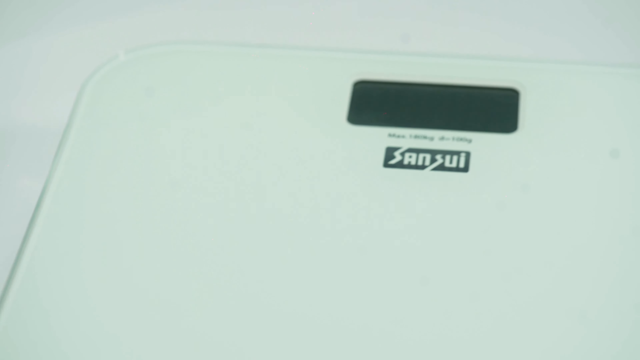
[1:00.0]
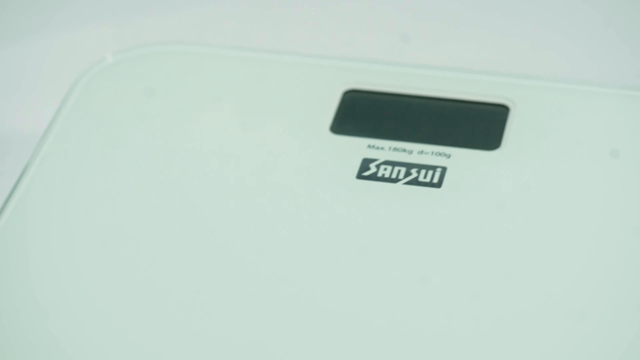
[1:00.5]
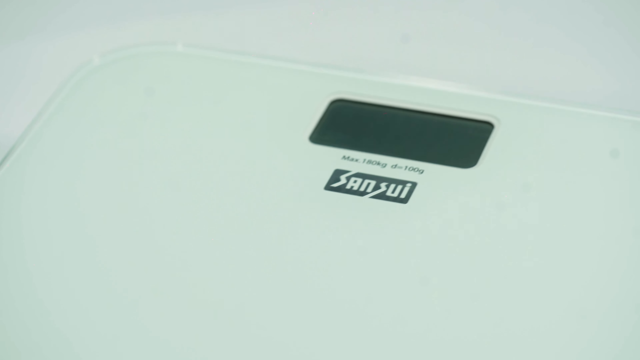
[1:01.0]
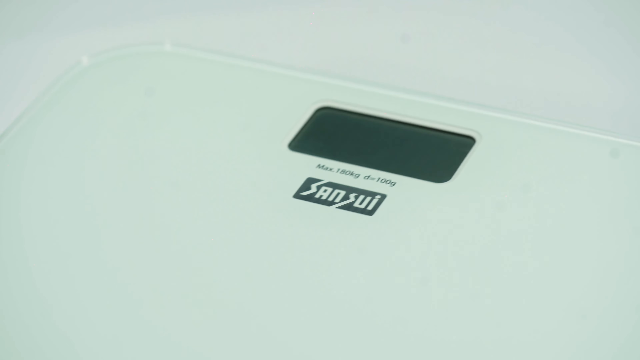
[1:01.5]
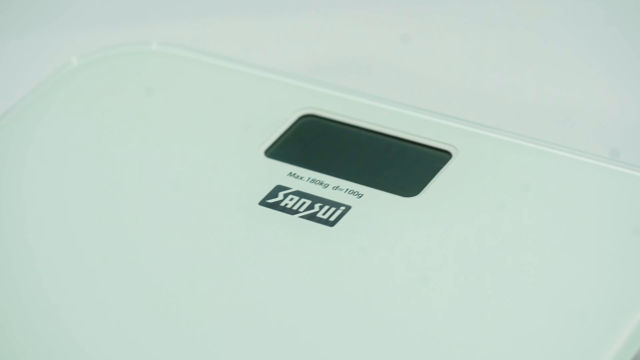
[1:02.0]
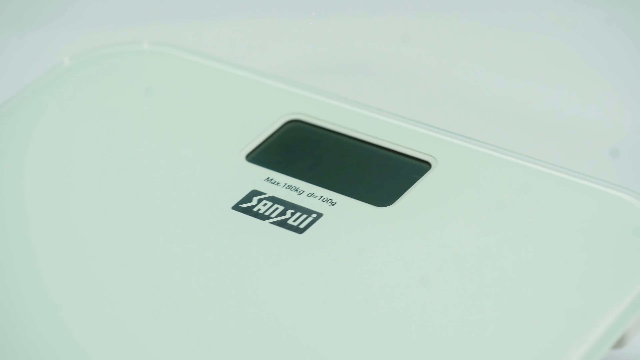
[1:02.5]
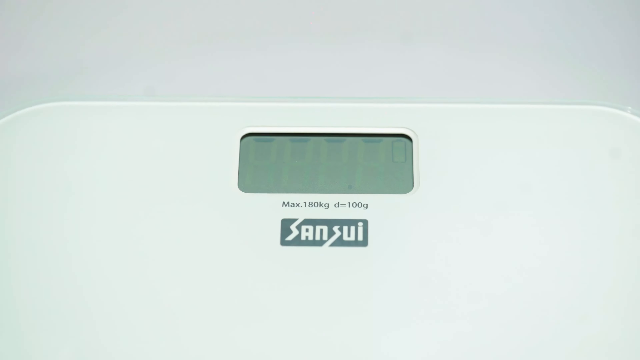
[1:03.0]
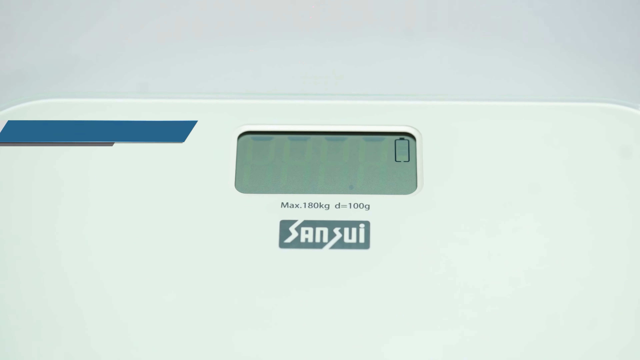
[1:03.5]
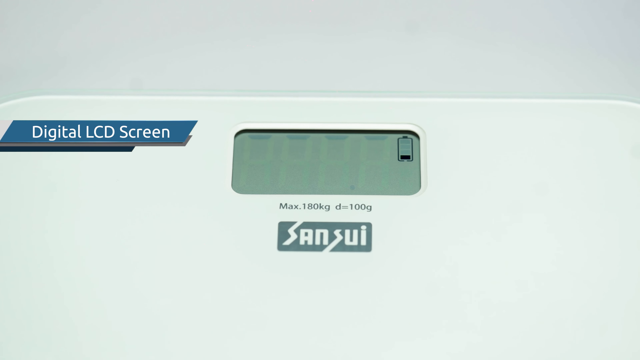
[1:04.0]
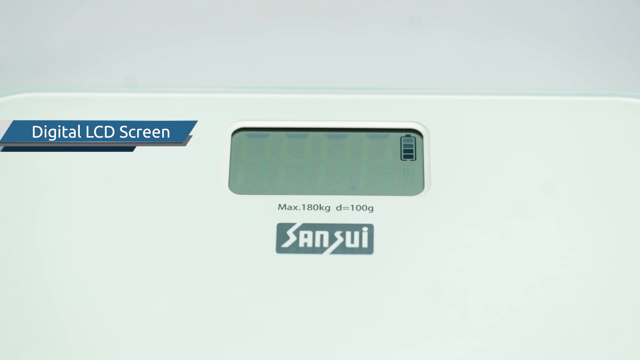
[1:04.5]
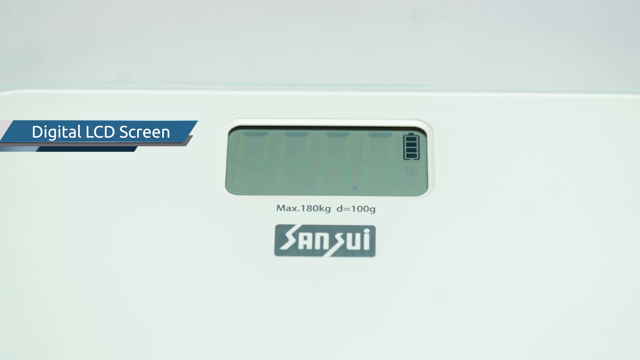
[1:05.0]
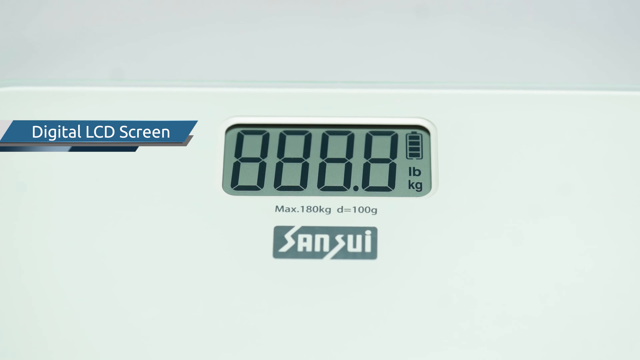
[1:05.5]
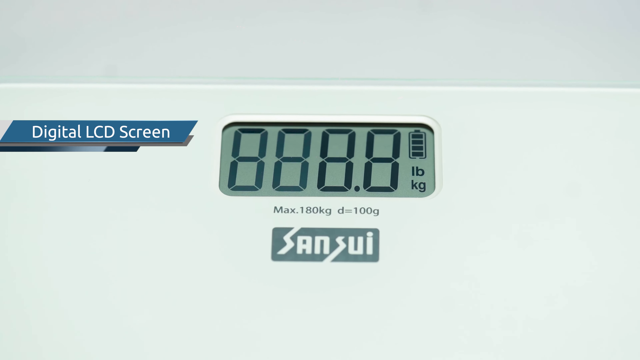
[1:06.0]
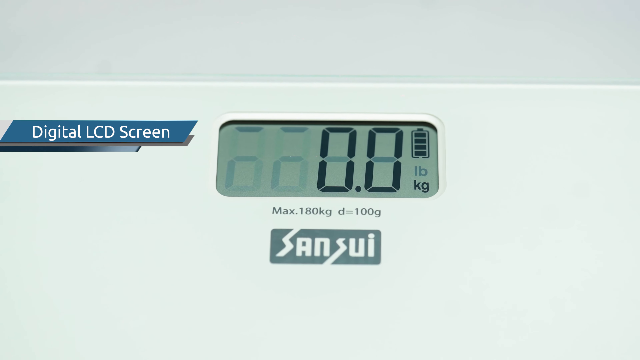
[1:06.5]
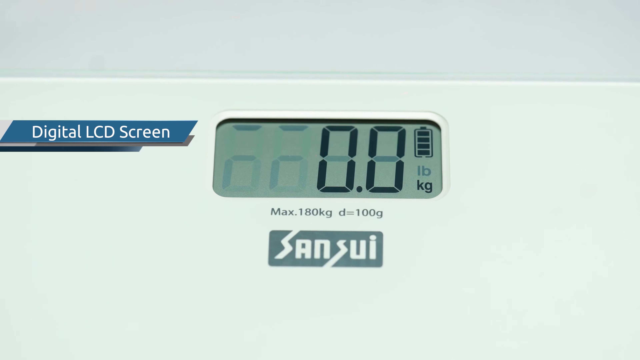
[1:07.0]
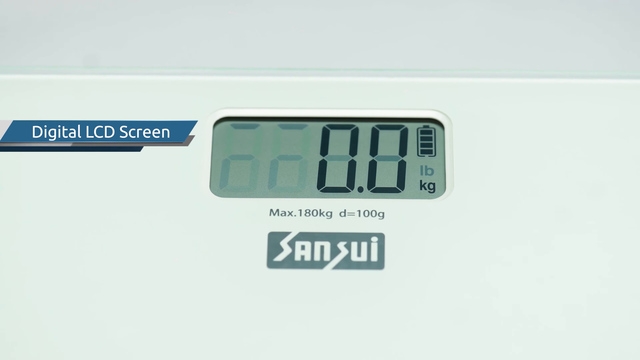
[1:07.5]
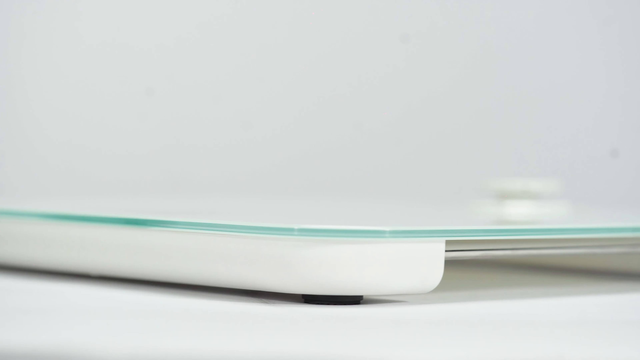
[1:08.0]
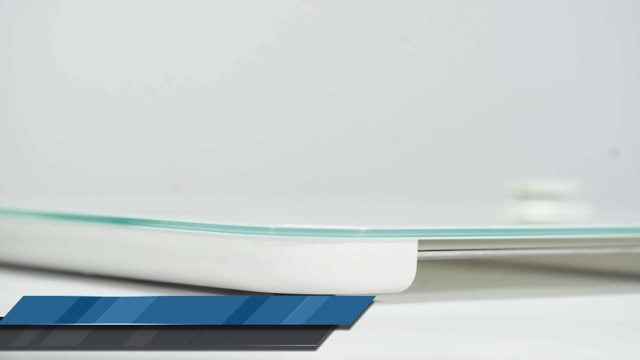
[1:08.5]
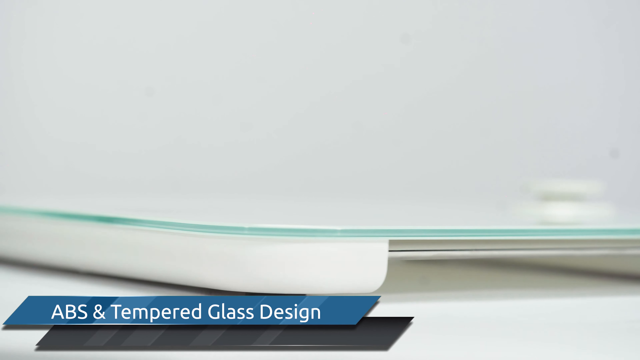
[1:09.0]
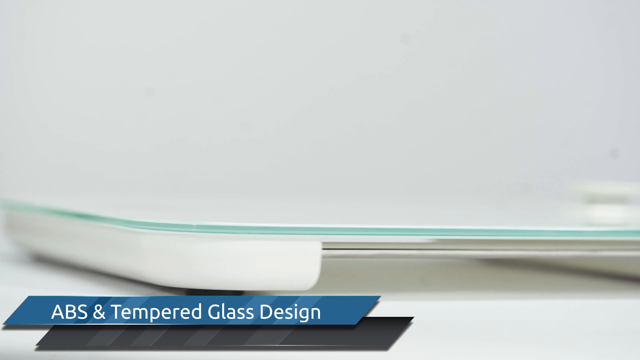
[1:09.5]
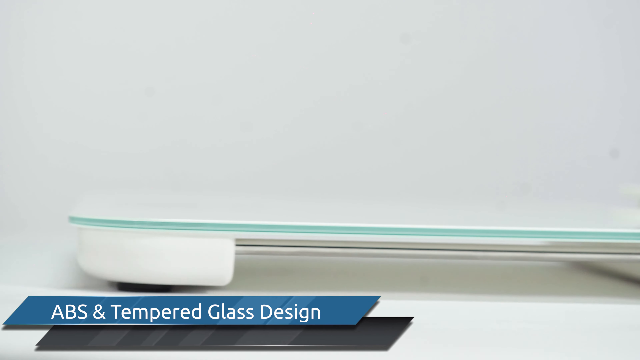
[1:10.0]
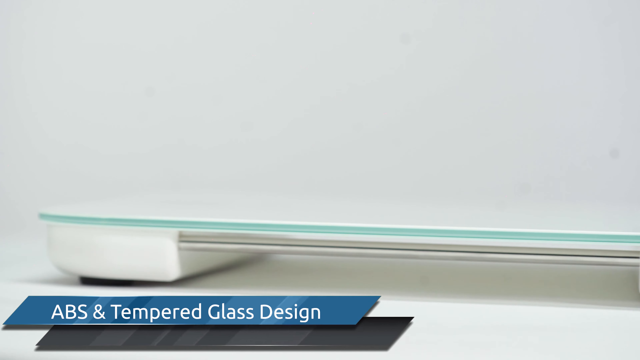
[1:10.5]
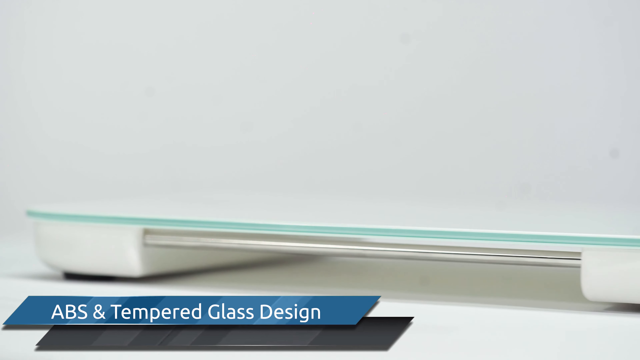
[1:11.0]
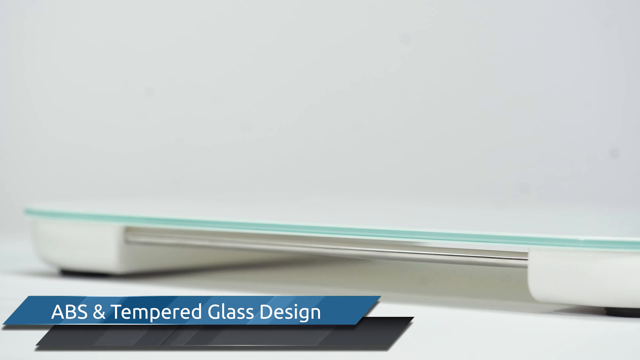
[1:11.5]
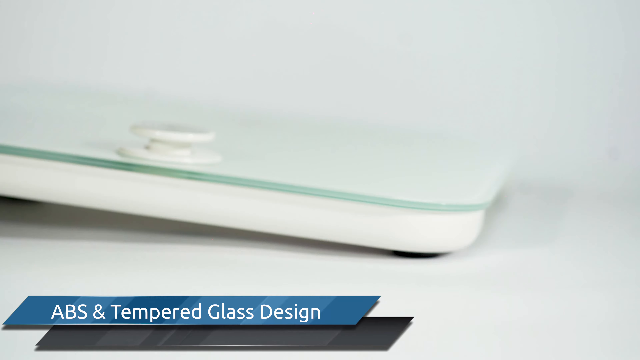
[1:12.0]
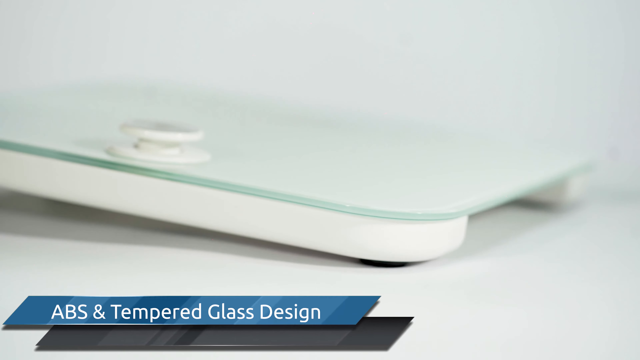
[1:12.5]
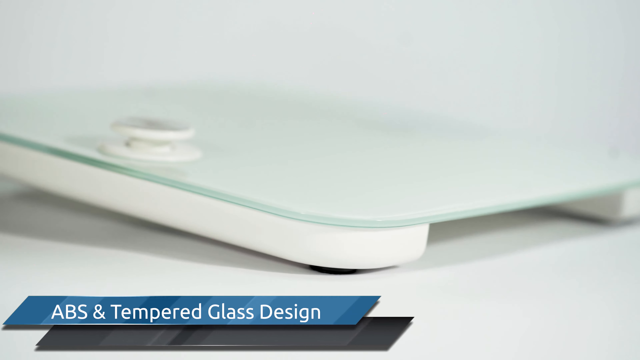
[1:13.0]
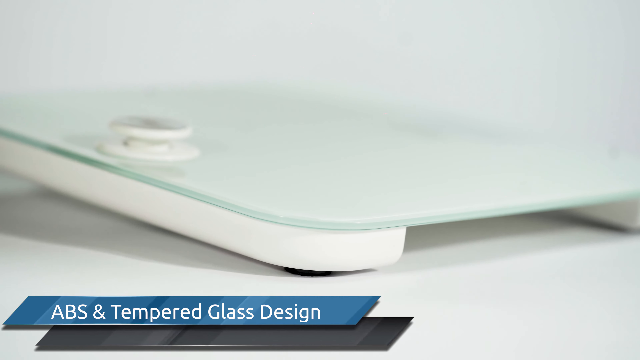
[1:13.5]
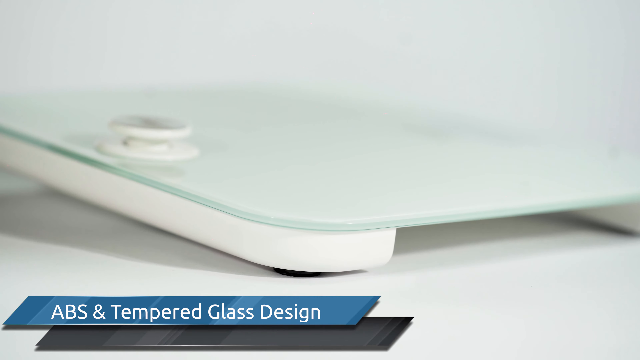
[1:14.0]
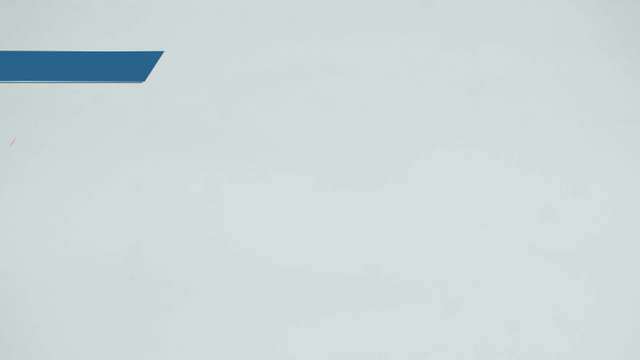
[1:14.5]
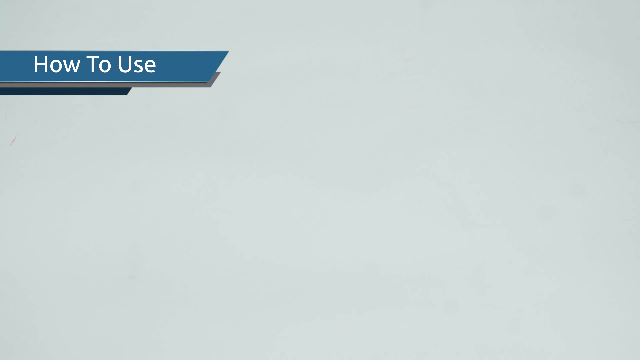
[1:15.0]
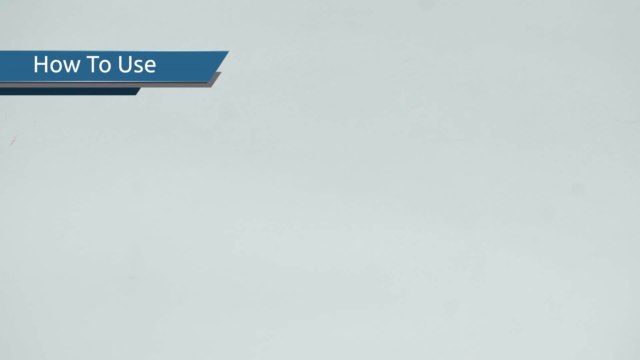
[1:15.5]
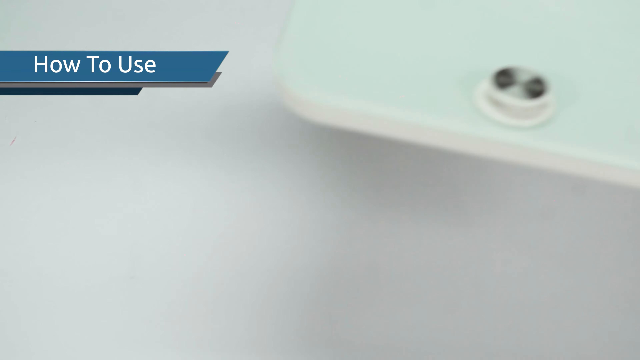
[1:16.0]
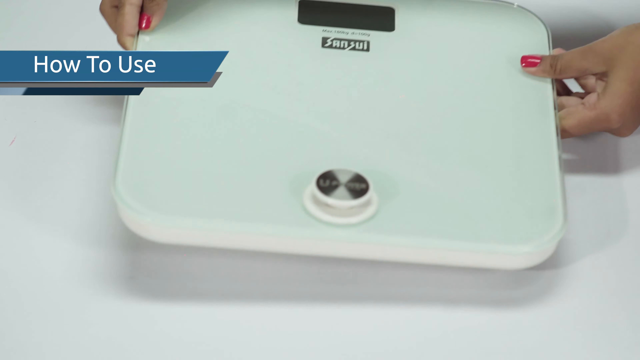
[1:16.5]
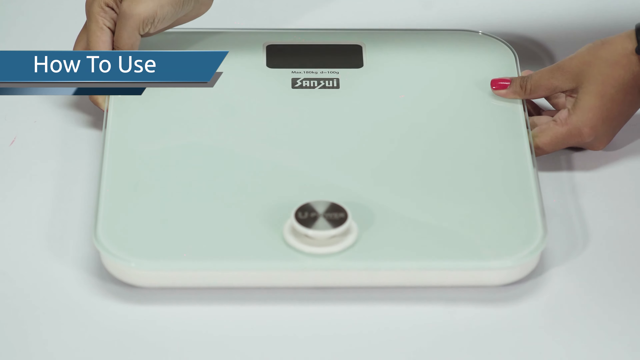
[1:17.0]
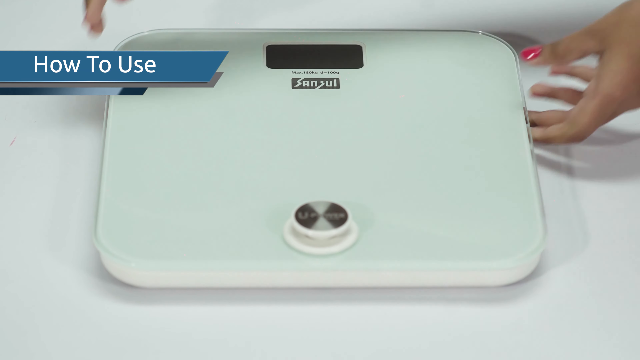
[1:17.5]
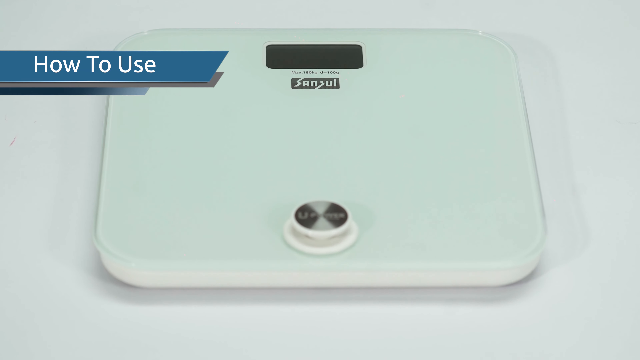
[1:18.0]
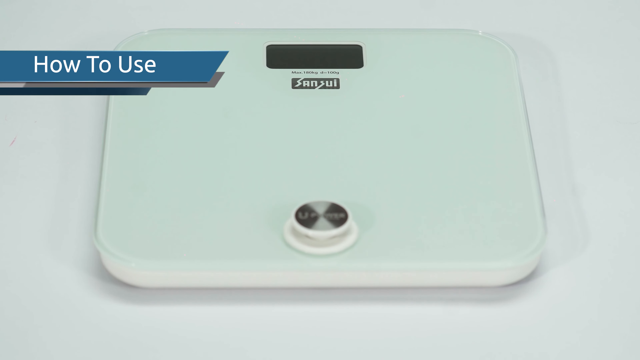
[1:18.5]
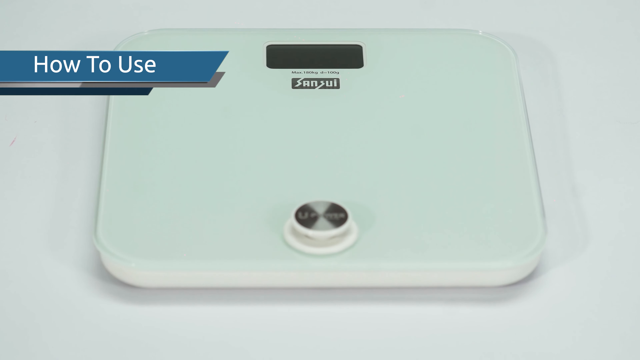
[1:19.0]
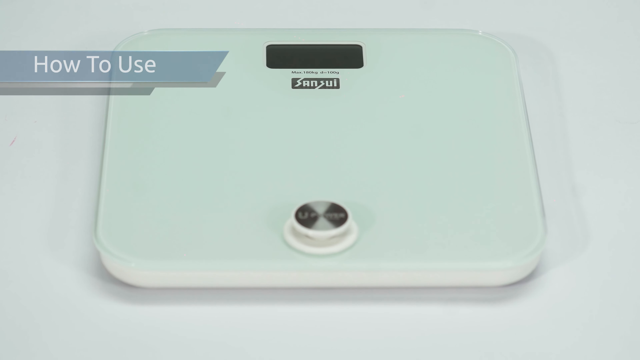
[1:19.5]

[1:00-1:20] A picture of scales with "Sansui" written on them is shown, with "How to use" on the screen at the top left. Another picture of the scales follows with the words "digital LCD screen" at the top left. The video states that the scales are made from two-millimetre tempered glass. A woman places the scales on a surface, and the video pans around so the scales are seen from different angles. "Digital LCD screen" is at the top of the video, and the woman placing the scales on the side gives instructions on how to use them. A close-up shows the digital screen displaying 000. This continues in a loop, with very close-up images showing the quality of the scales.